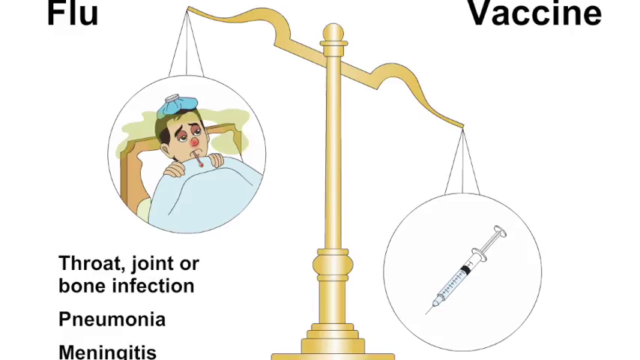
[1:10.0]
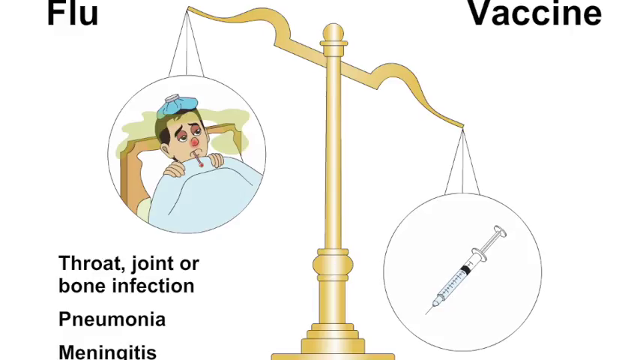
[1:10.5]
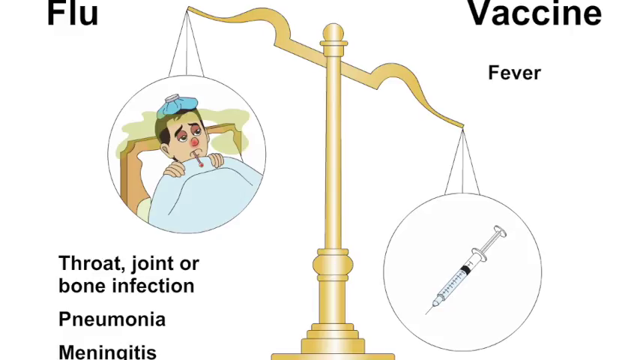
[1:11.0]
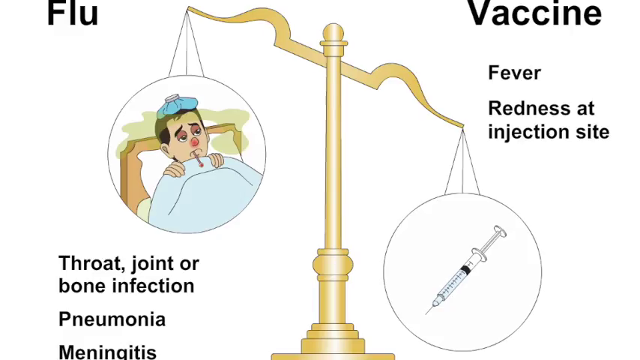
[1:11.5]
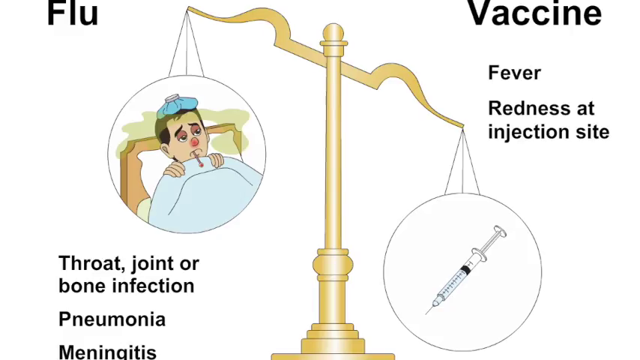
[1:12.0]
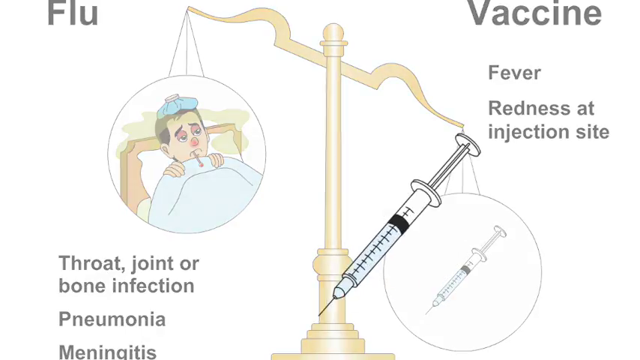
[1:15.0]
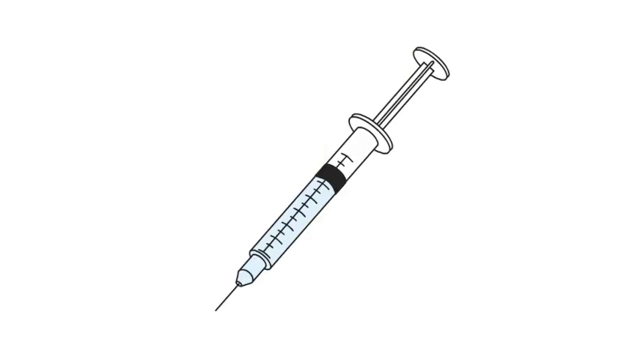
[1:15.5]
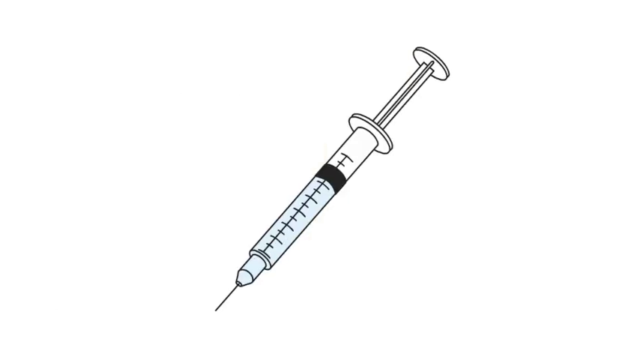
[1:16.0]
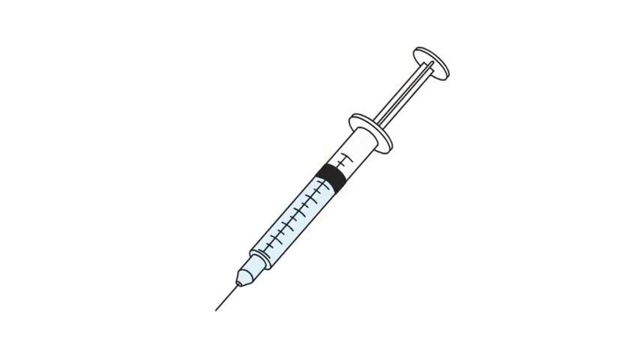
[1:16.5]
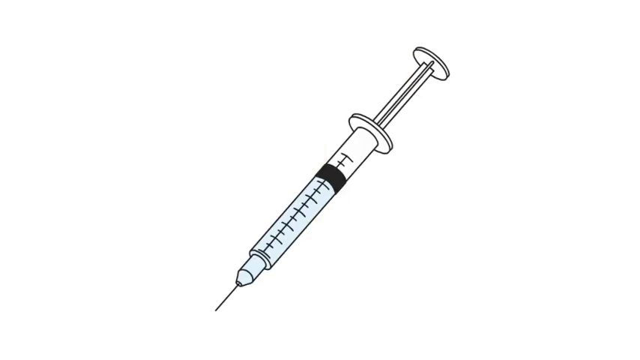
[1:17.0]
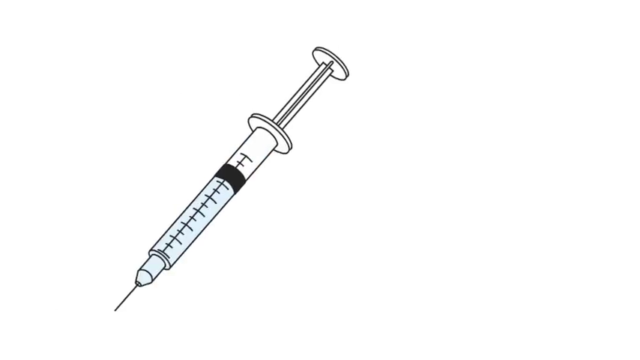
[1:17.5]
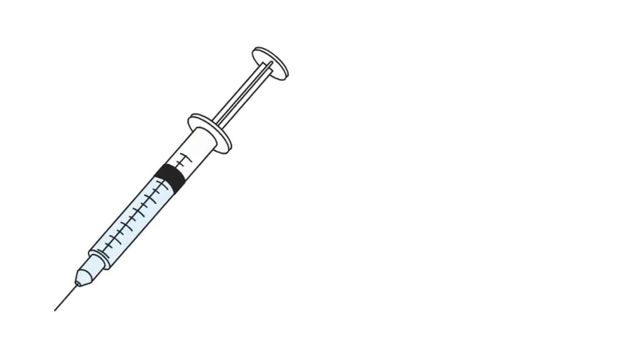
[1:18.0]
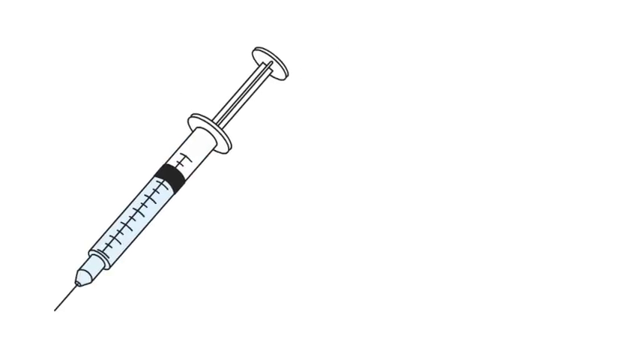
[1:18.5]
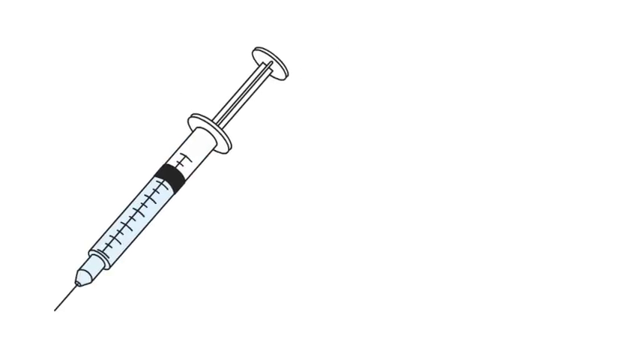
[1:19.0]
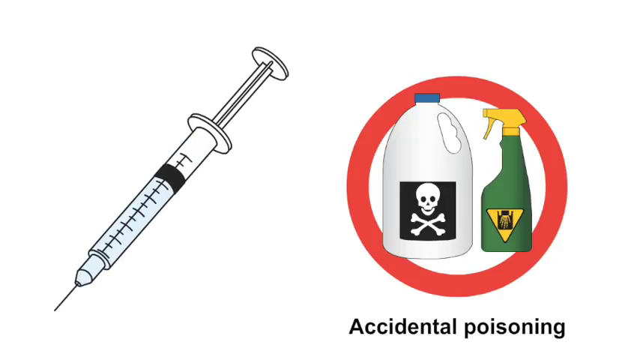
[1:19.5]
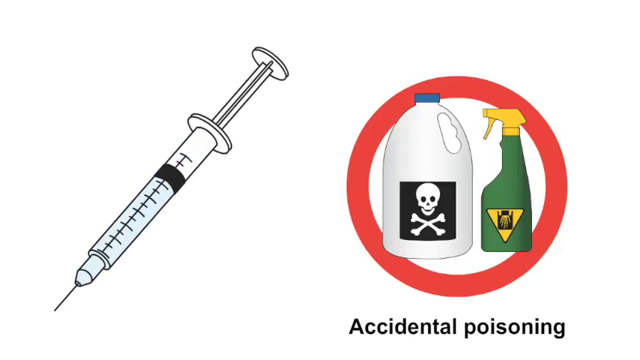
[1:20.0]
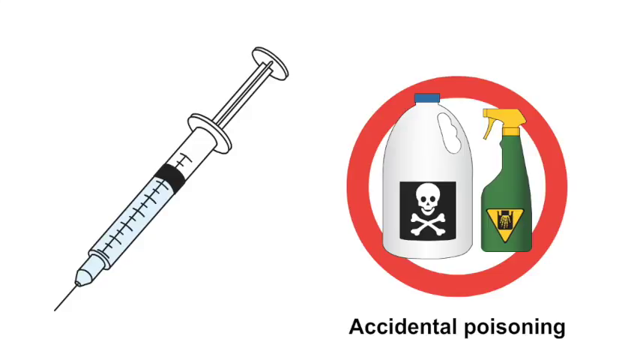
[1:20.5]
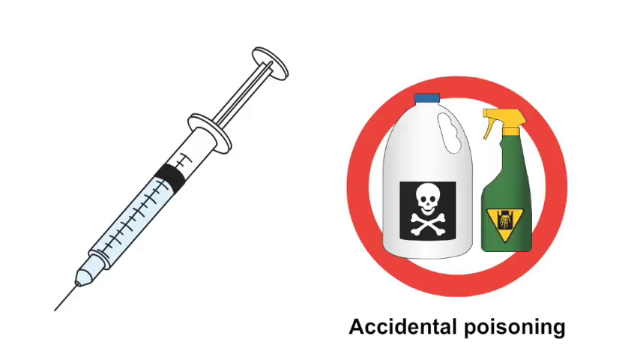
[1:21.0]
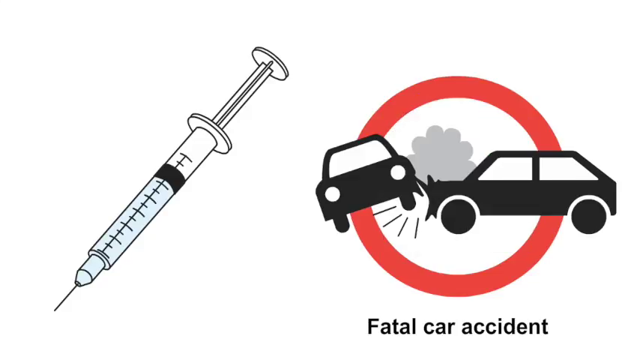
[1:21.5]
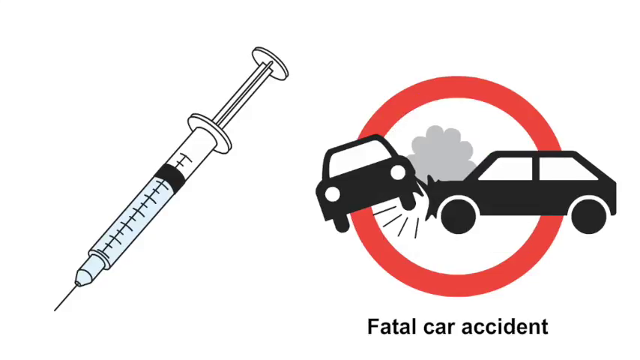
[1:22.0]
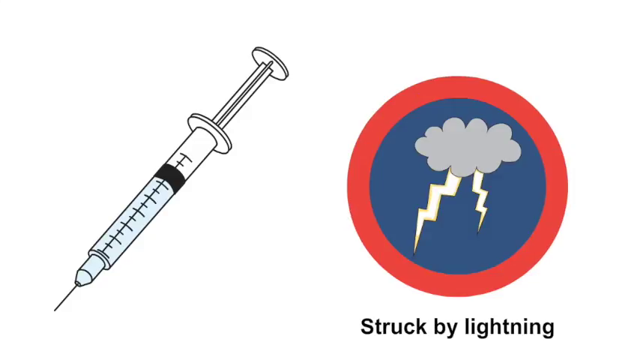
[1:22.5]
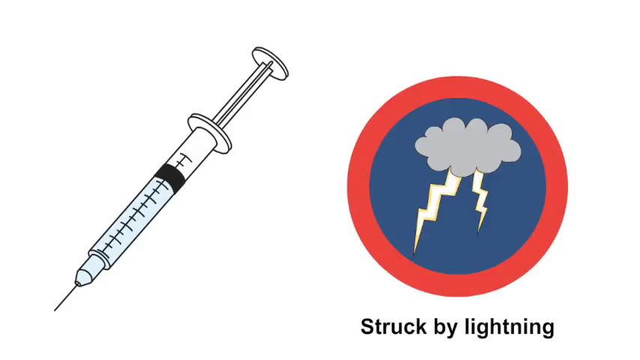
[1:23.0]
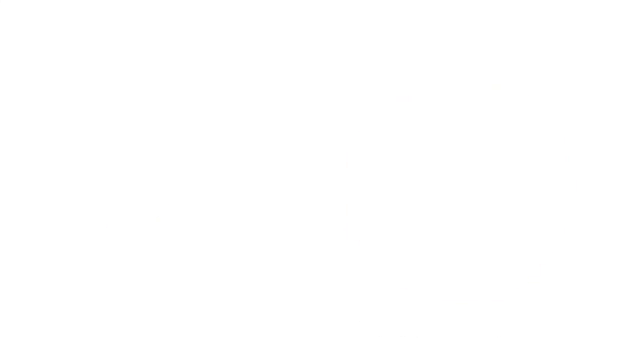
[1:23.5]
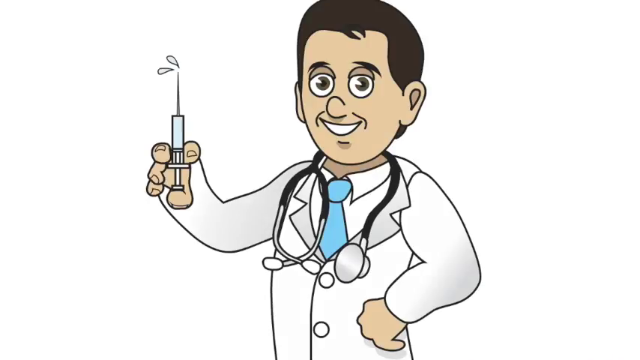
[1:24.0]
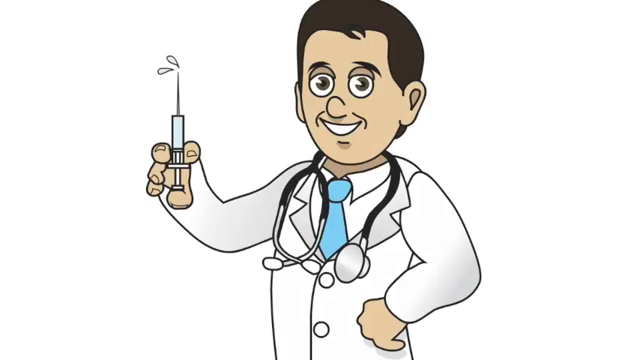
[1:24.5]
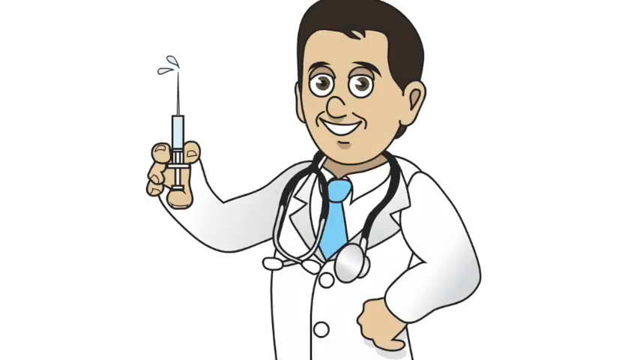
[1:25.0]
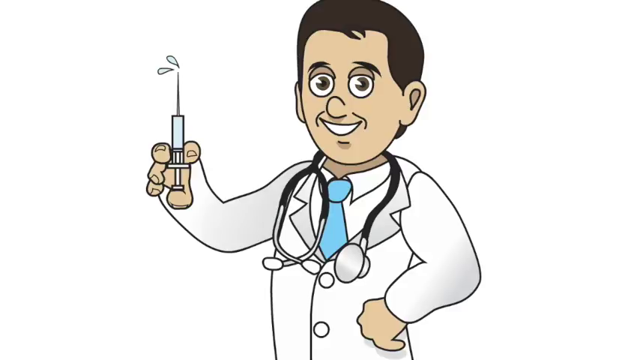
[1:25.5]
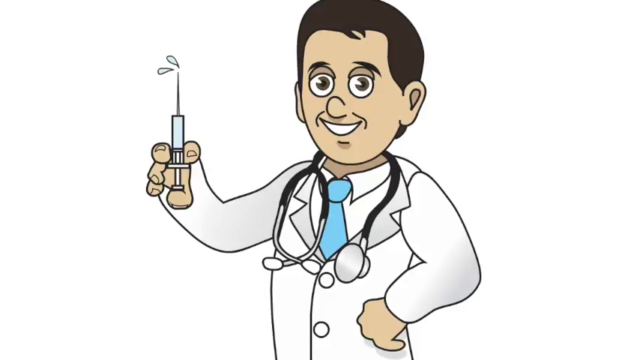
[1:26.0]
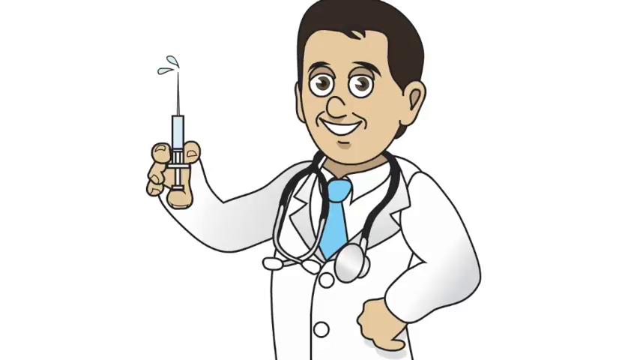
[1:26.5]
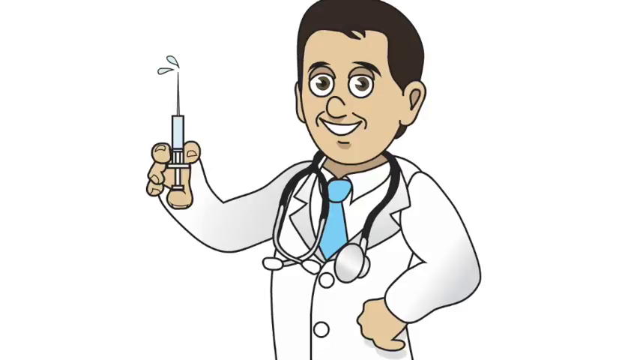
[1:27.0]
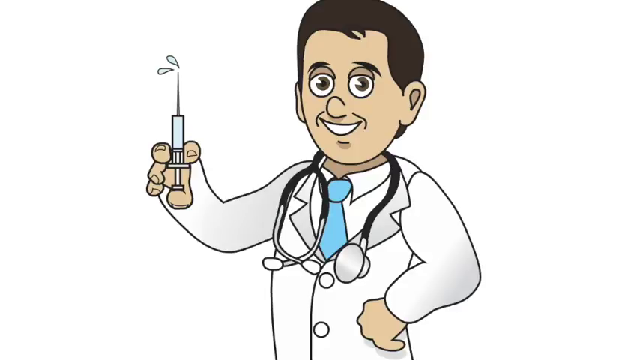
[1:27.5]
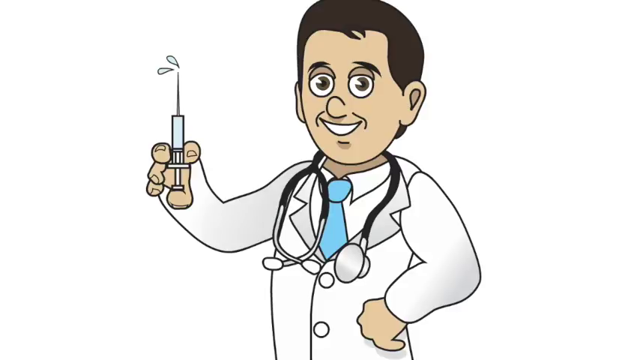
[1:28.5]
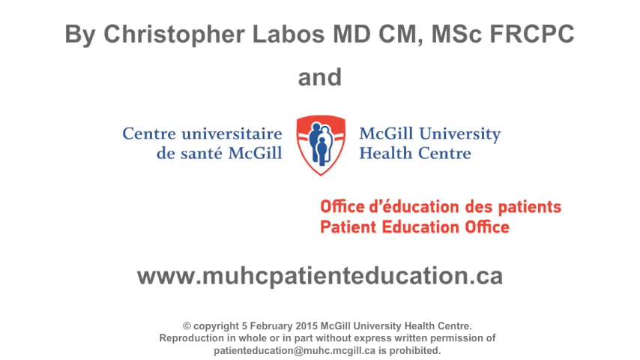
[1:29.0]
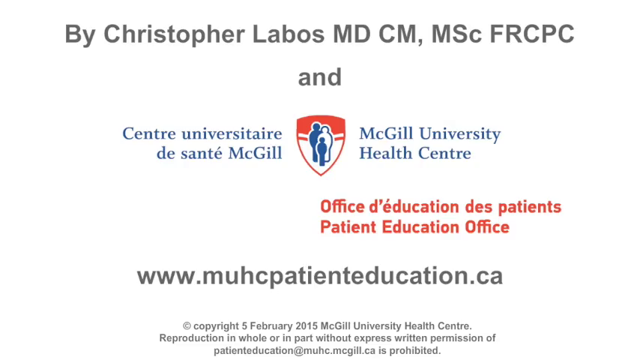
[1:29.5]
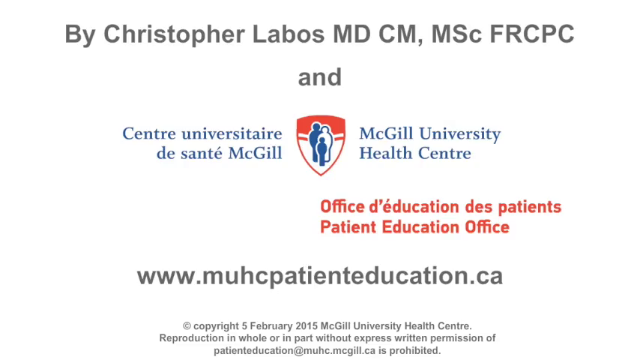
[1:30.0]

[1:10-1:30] The animation opens on an image of a scale. On the left side of the screen, on the scale, is a circle containing a picture of a man who appears to be sick, with an ice pack on his head and a thermometer in his mouth. On the left side of the scale, which is weighted heavier, is the image of a hypodermic needle. The top left corner says "Flu" and the top right corner says "Vaccine." The lower left of the screen says "Throat, joint, or bone infection," "Pneumonia," and "Meningitis." On the right side, text reading "Fever, redness at injection site" appears below the word "Vaccine." Then all of this disappears, and the hypodermic needle appears in the center of the screen and moves to the left. On the right side, a red circle appears containing a white bottle with a skull and crossbones and a green spray bottle with a yellow warning triangle on it, with the text "Accidental poisoning" below. A similar red circle follows with two cars and the text "Fatal car accident." This disappears, and inside the red circle two lightning bolts come out of a cloud, with the text "Struck by lightning." Next, an animated man dressed as a doctor holds a hypodermic needle in his right hand, pressing it so that two little drops of liquid come out of the top of the needle. The video ends with an end card reading "by Christopher Labos, MD CM, MSc, FRCPC" and the McGill University Health Center, whose name appears in French and in English.